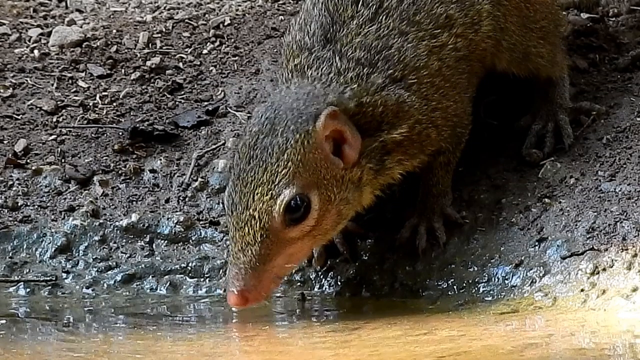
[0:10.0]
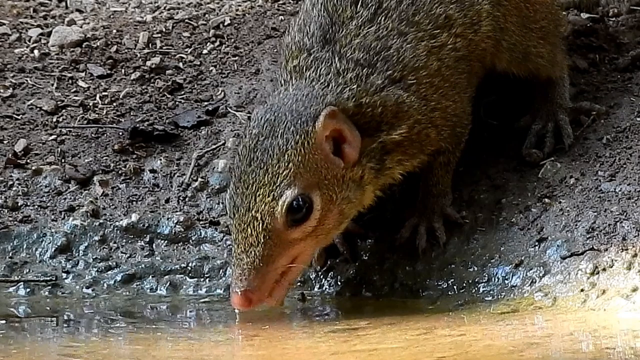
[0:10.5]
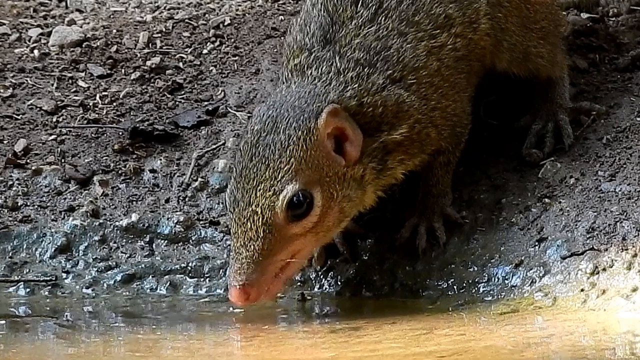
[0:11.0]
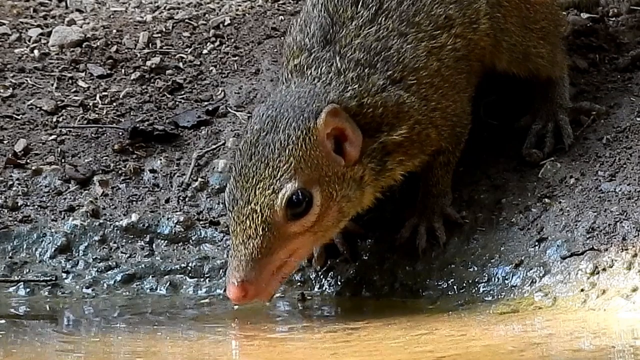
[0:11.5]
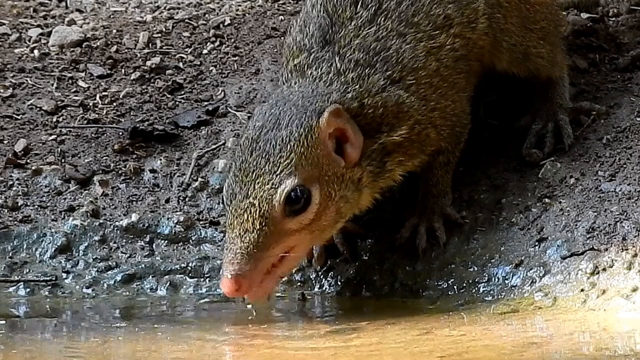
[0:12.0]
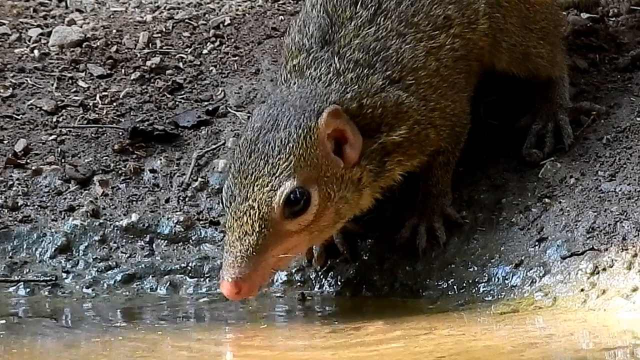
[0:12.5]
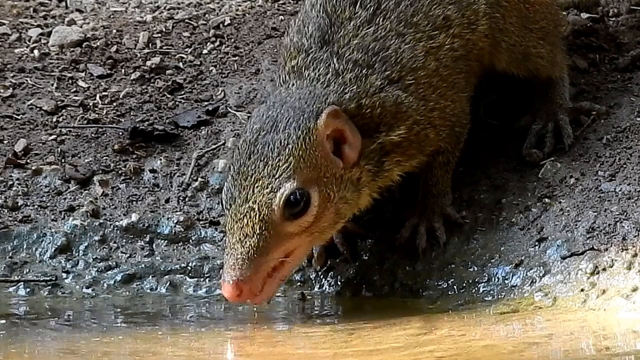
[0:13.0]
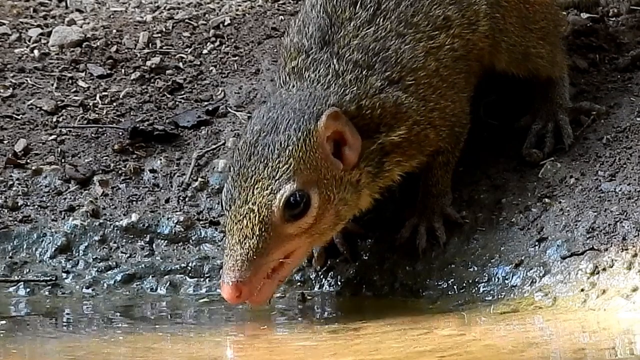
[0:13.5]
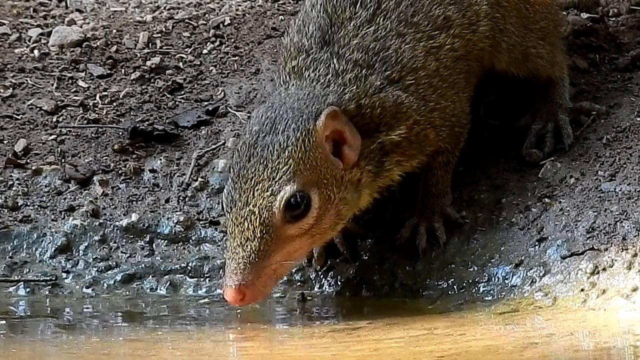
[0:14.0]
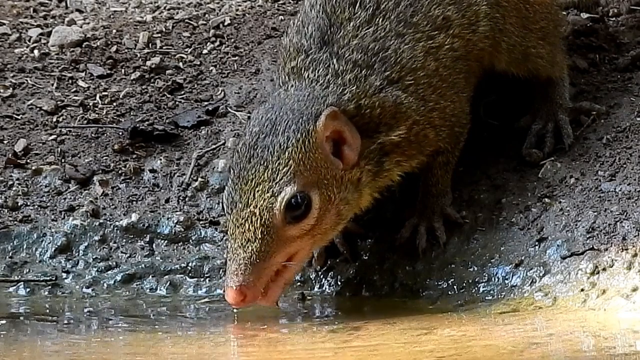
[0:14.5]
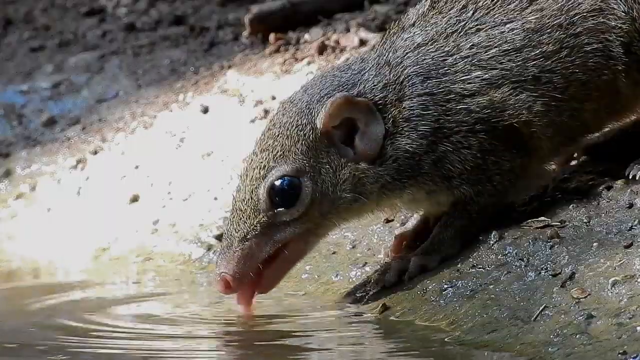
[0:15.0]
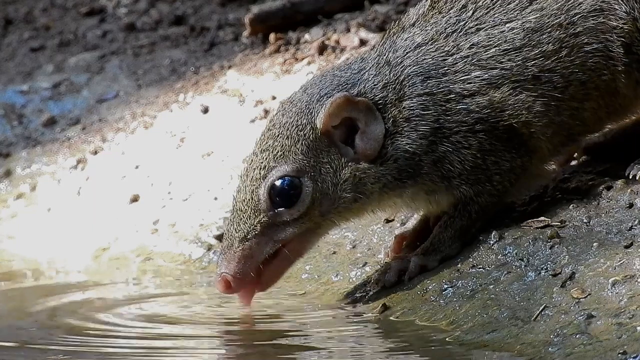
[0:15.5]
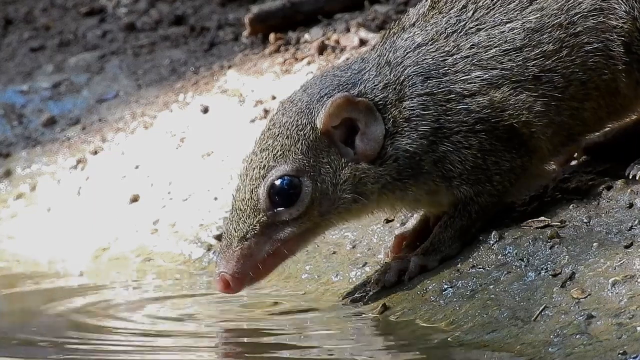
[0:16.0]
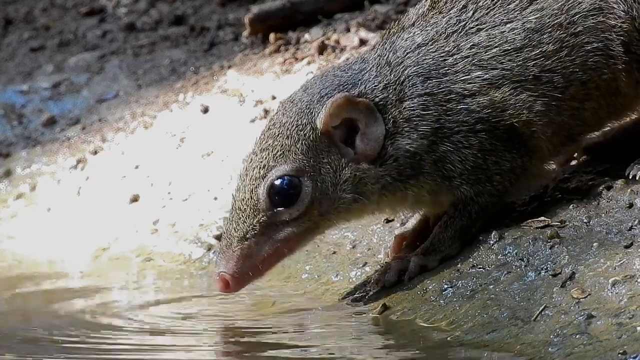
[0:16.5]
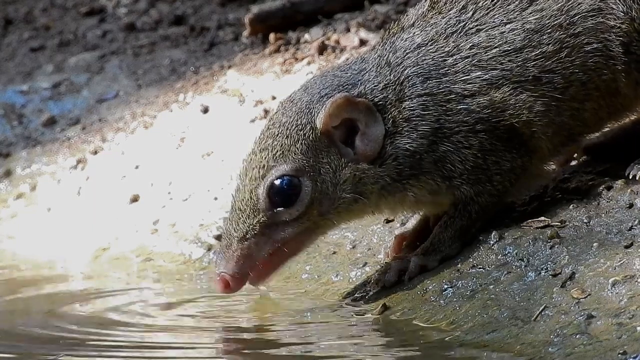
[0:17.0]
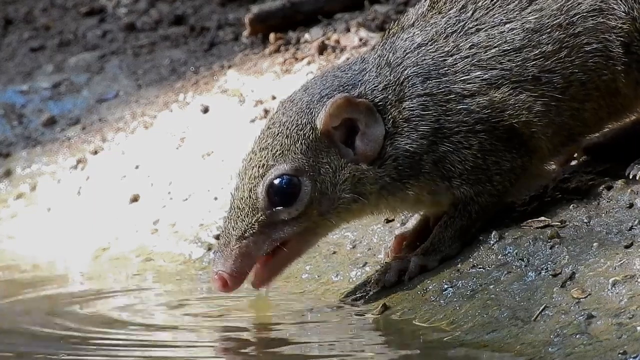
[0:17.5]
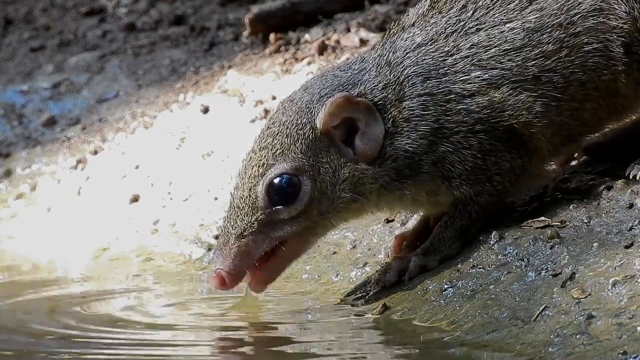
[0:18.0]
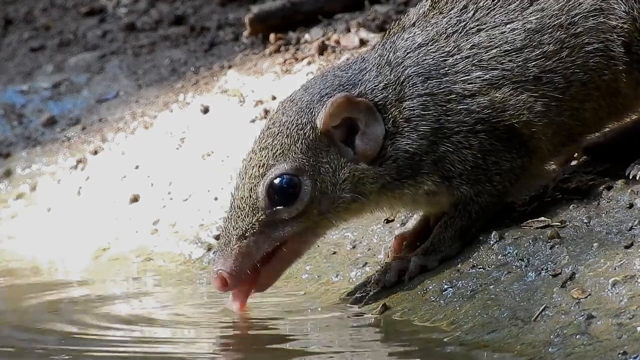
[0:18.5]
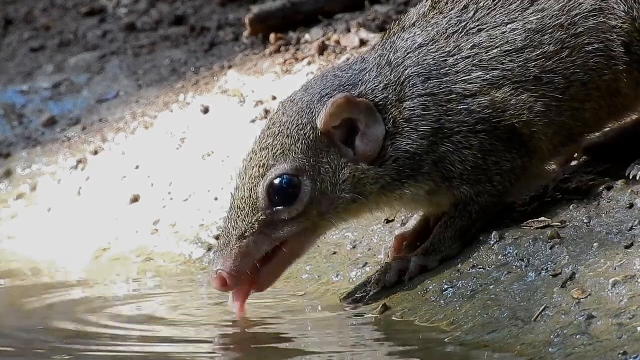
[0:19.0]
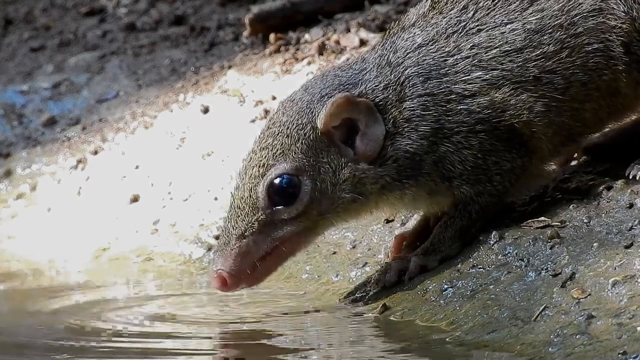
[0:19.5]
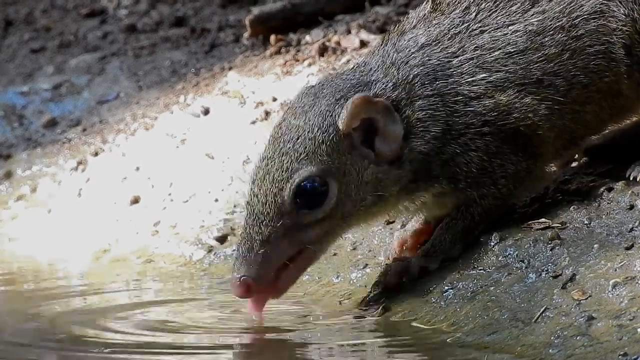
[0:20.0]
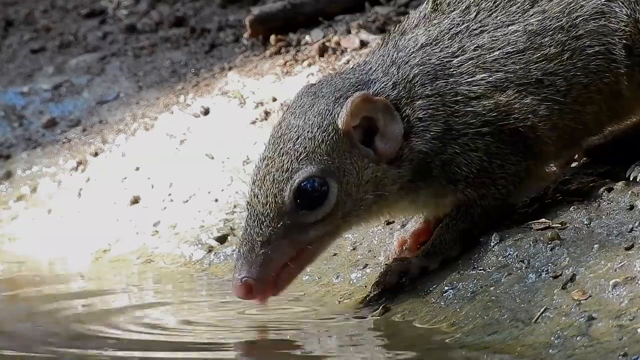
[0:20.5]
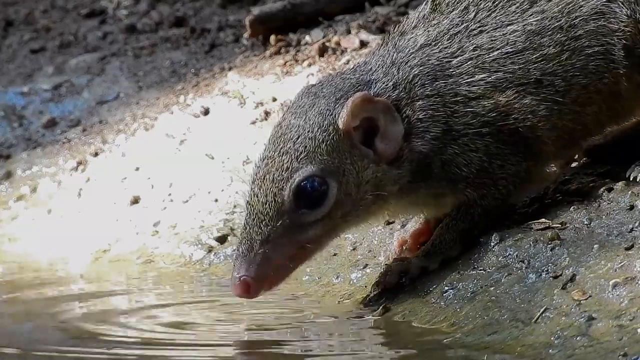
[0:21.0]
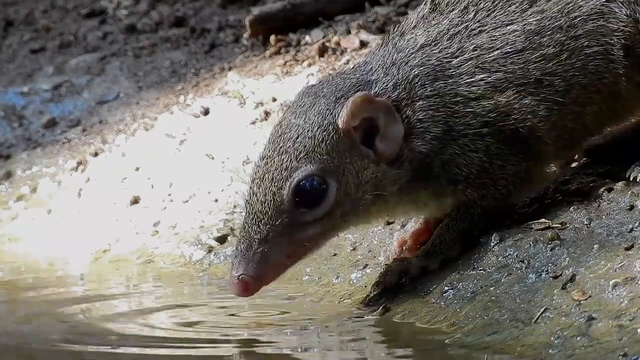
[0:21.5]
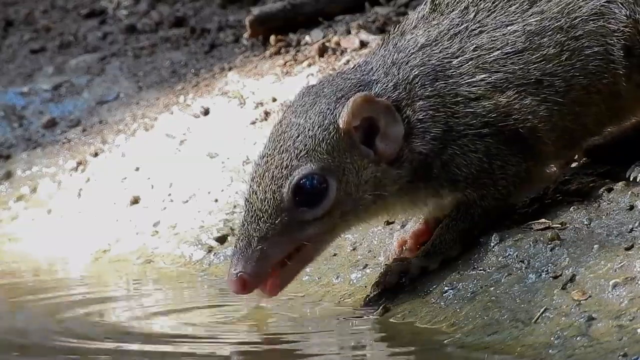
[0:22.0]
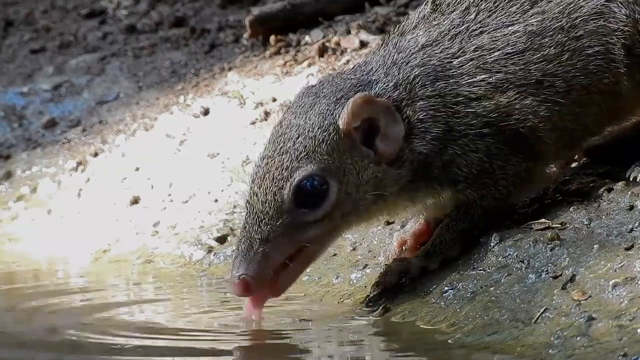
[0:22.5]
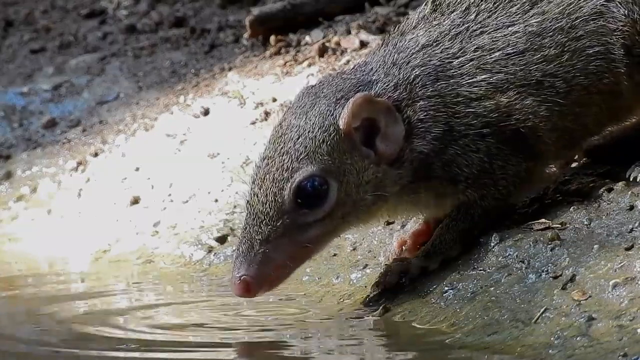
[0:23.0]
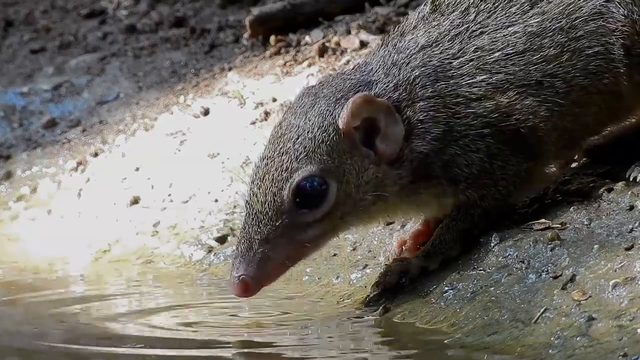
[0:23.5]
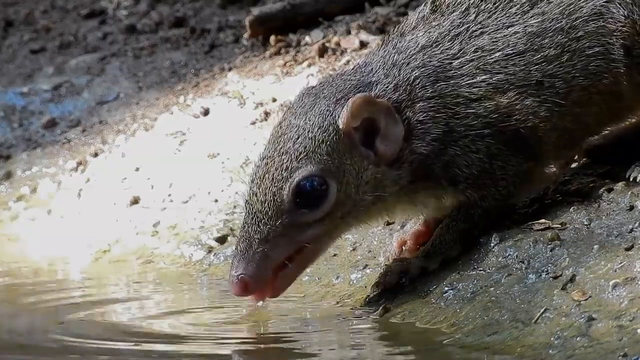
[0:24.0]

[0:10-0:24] A shrew laps up water in a pond. It has gray, black and beige hairs on its body, a pink nose, black eyes, beige and pink ears, and pink toes. The shrew stands on the shore next to the pond, on a slope of about 22 degrees, and the ground near the edge of the pond is wet. In slow motion, its tongue pushes in and out as it laps up the water, its mouth opening and closing. The video then returns to regular speed, showing a side view of the shrew as it drinks.